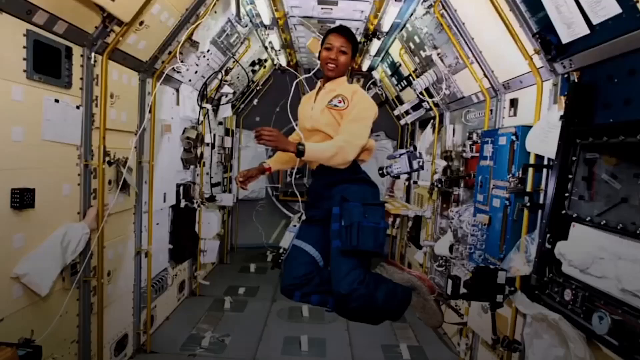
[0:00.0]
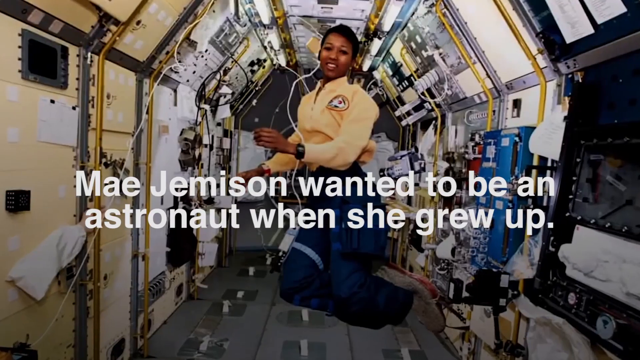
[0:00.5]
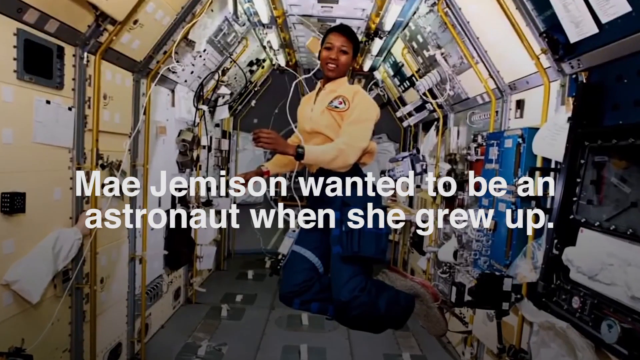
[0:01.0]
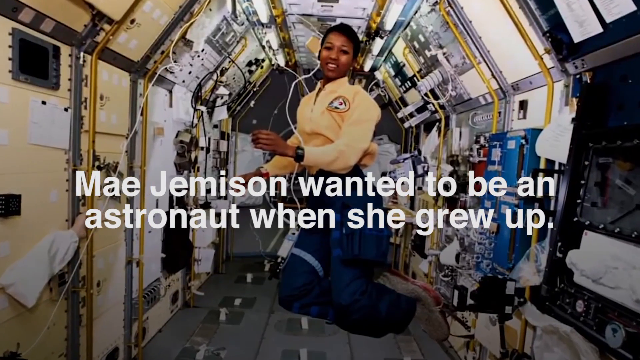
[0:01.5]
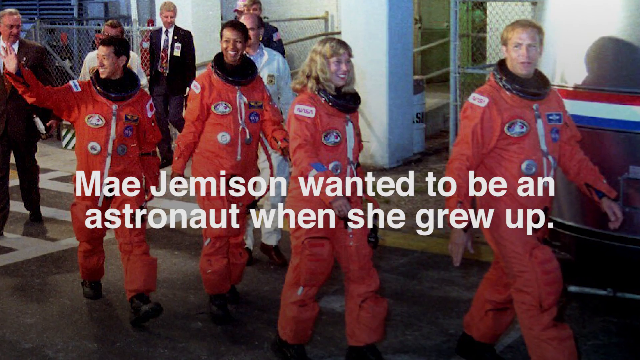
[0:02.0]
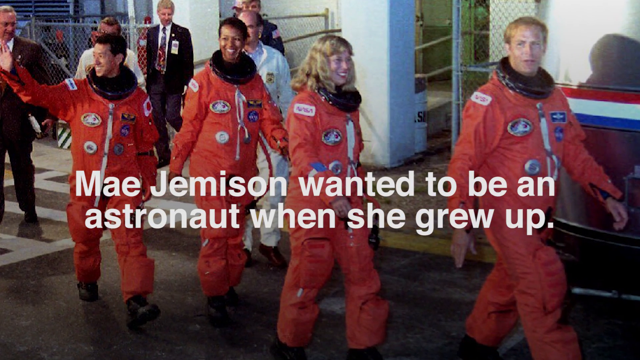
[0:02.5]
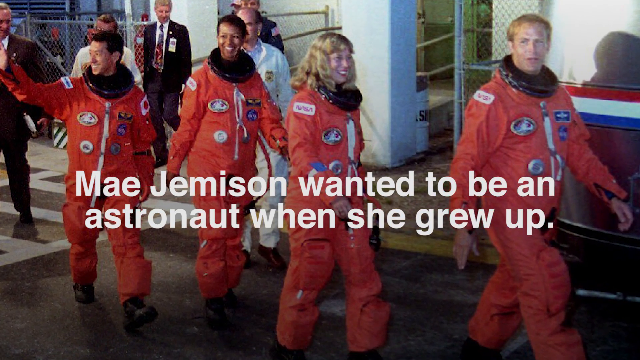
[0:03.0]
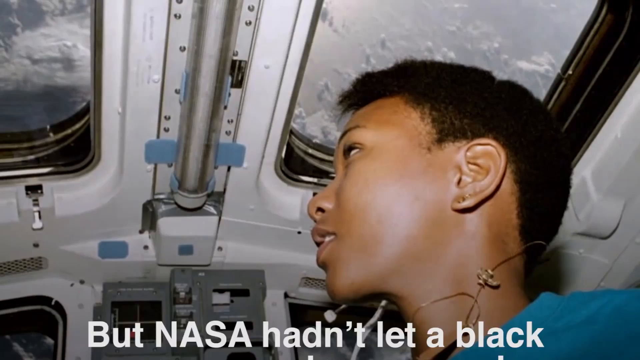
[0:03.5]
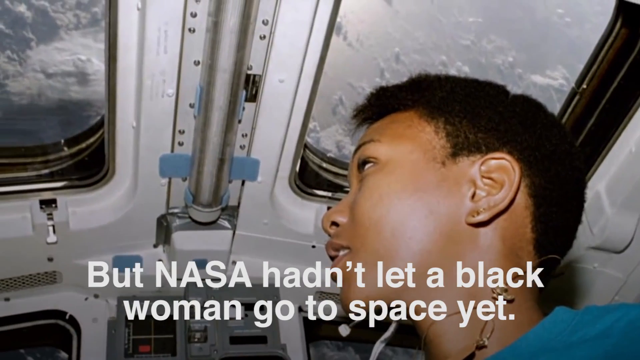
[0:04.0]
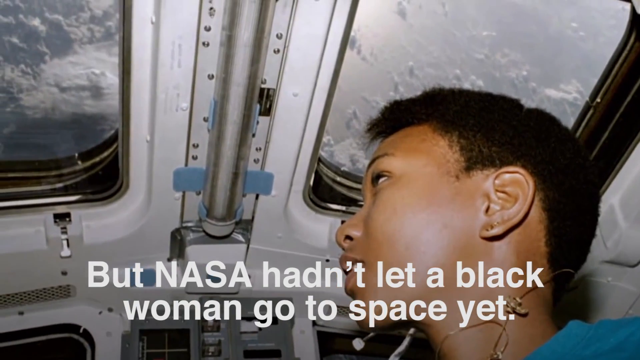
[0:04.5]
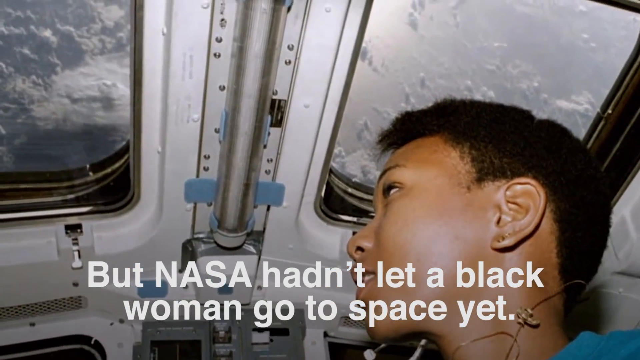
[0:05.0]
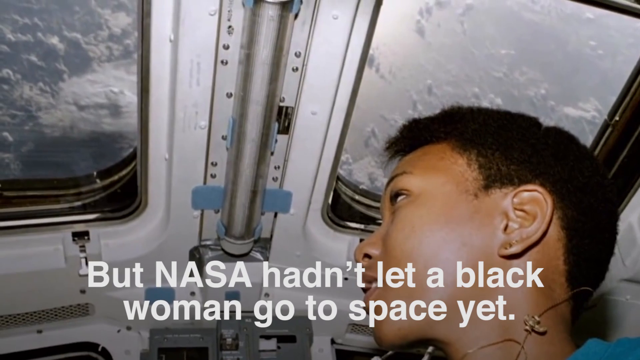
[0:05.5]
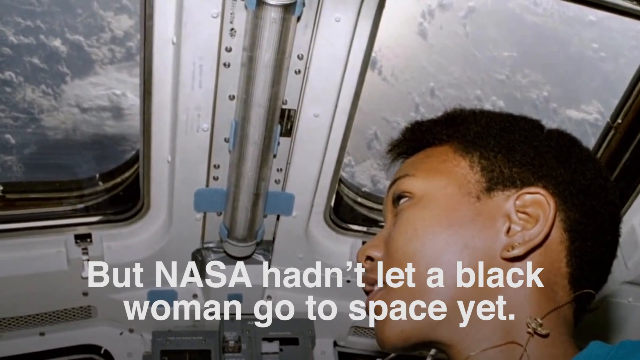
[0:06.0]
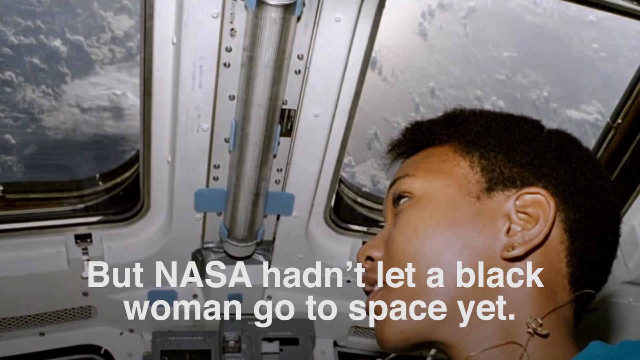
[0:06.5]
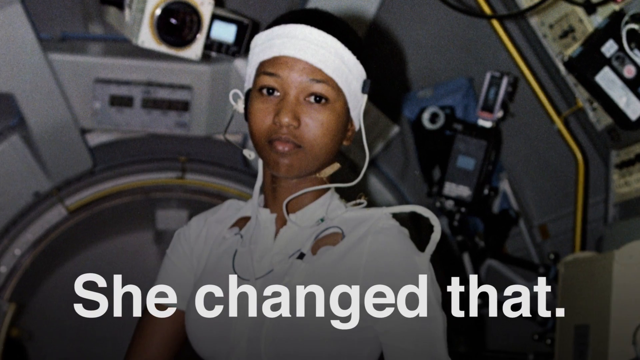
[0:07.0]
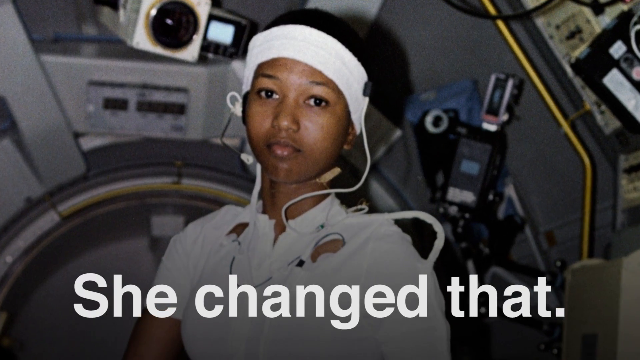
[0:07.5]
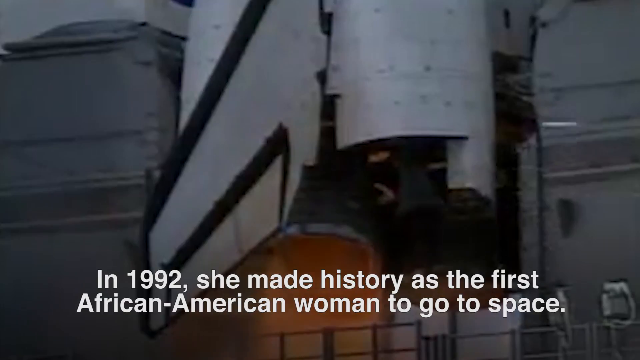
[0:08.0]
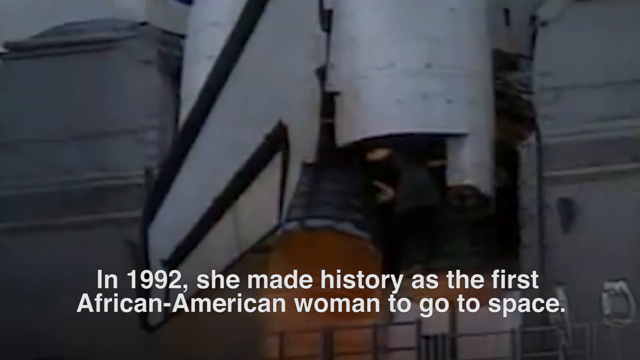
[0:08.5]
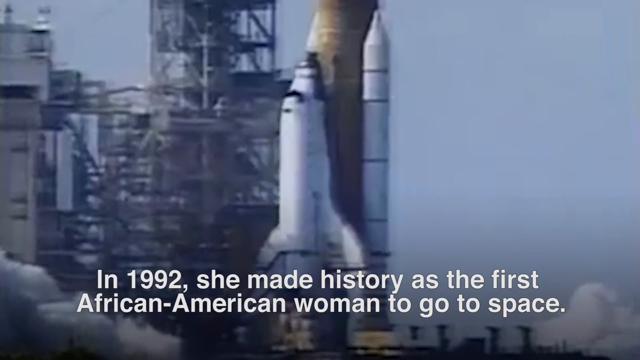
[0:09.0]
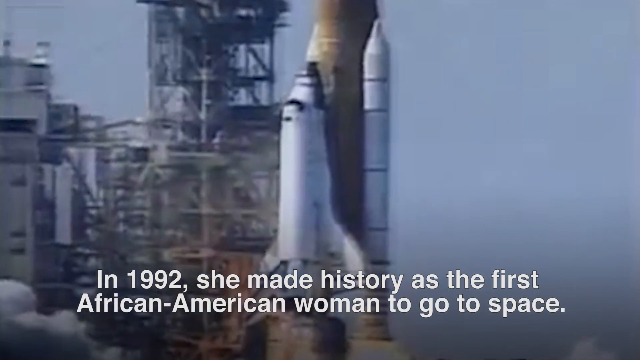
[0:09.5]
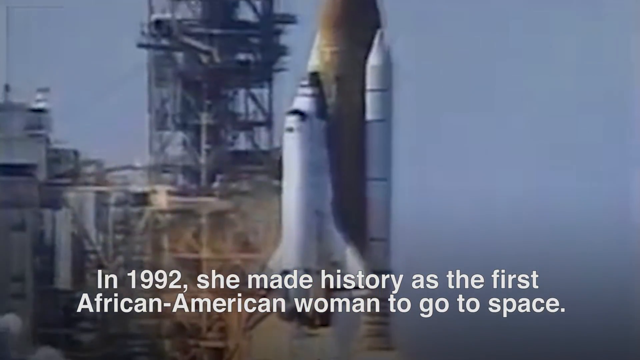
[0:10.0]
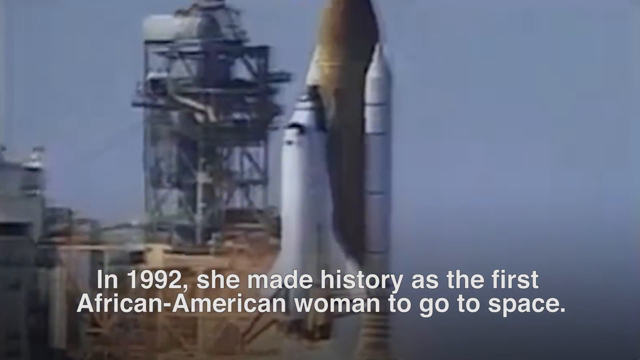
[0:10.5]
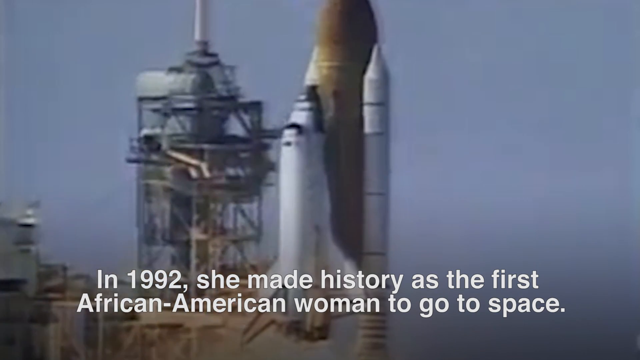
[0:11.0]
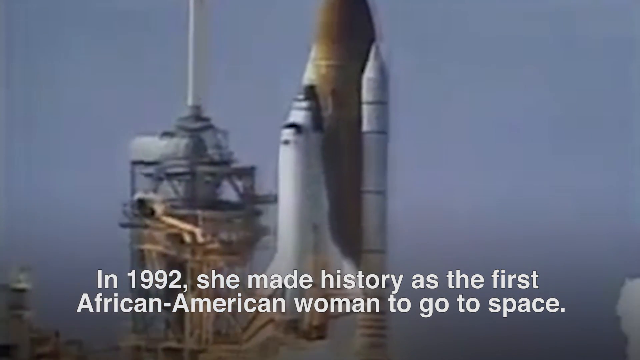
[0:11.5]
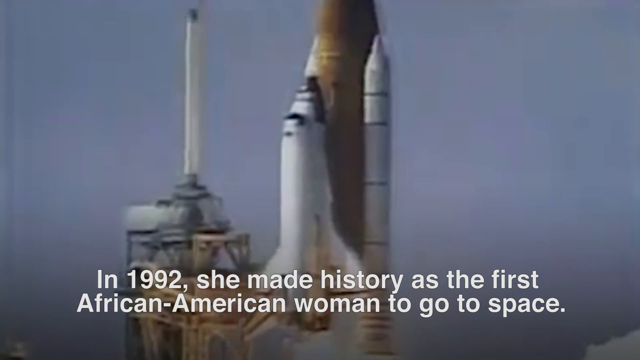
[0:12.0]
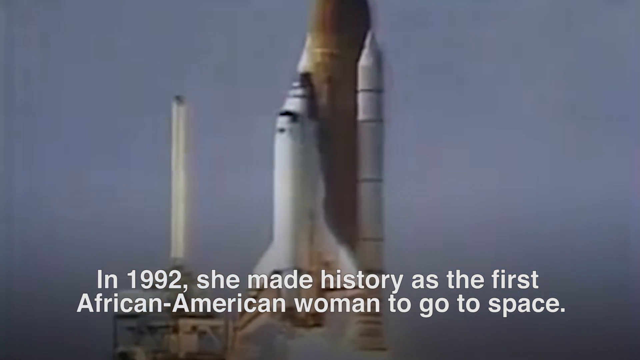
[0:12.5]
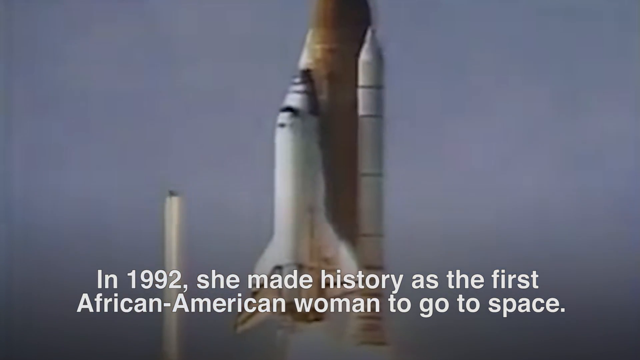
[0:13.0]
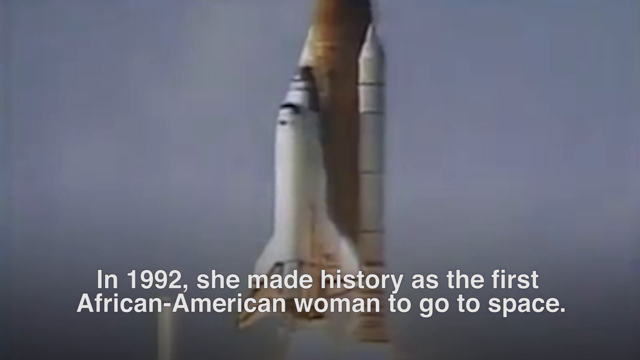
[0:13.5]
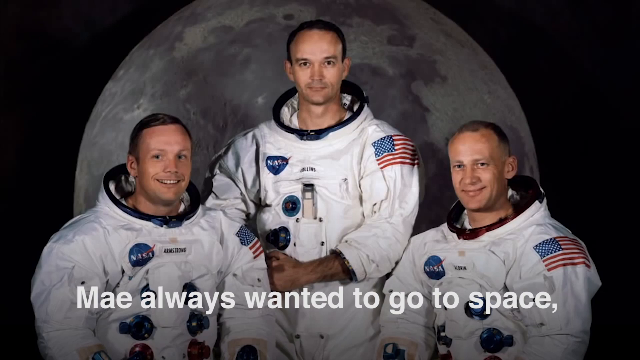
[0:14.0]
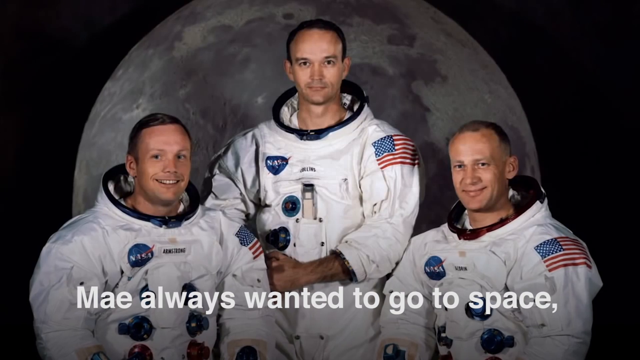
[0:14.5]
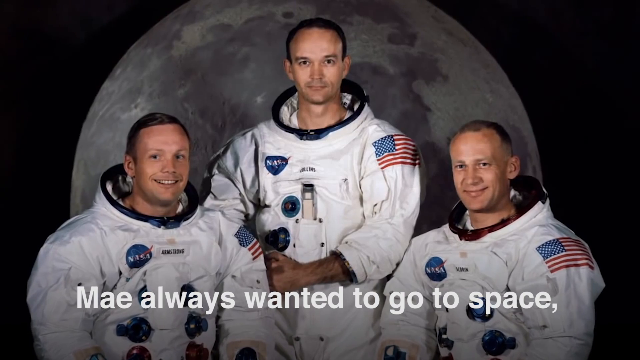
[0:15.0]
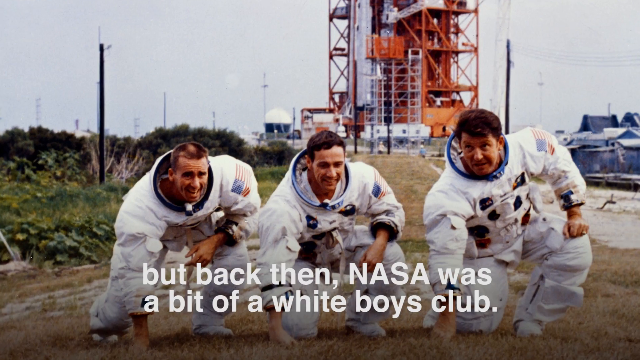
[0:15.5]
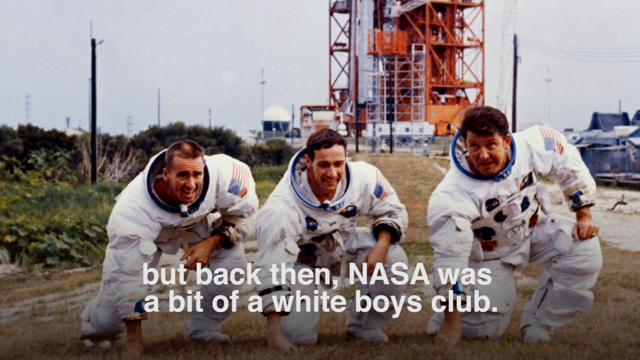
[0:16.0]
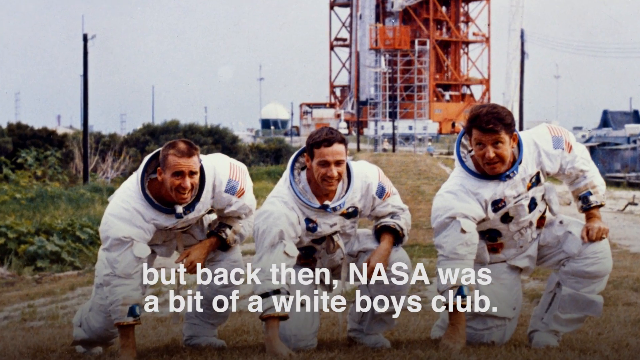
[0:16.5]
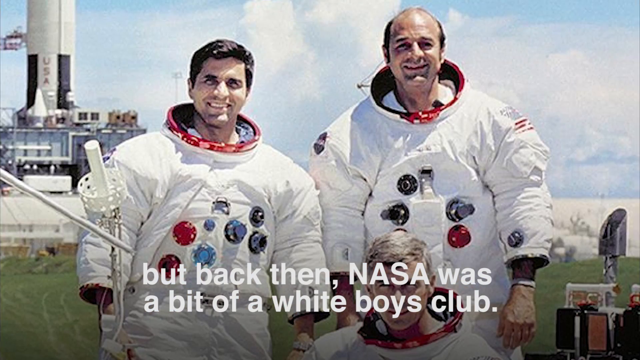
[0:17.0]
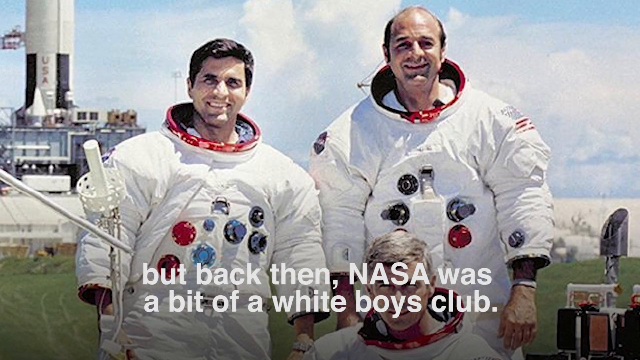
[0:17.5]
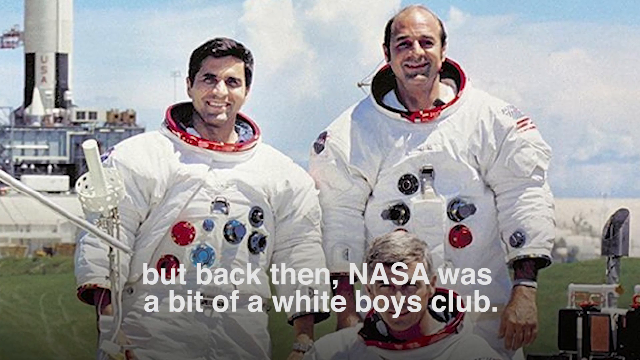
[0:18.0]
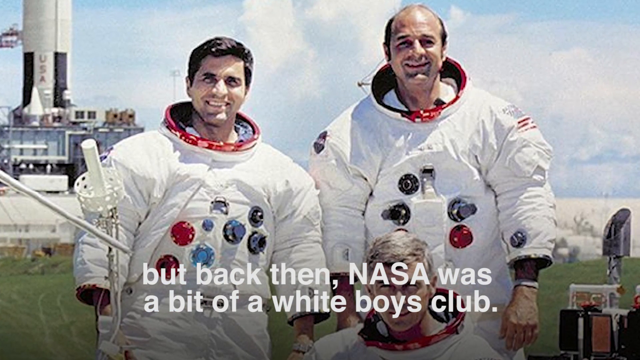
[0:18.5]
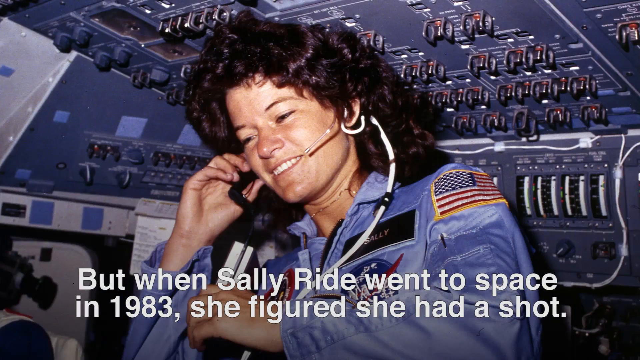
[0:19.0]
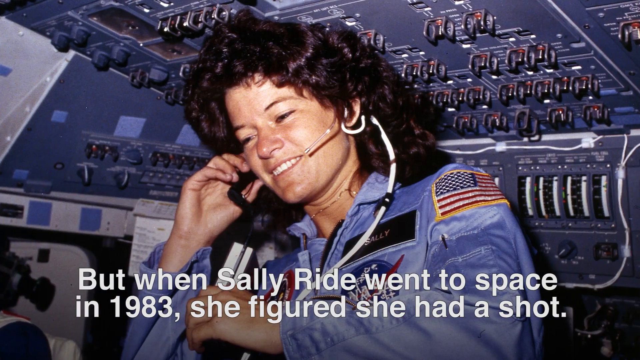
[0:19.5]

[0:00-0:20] A space shuttle is shown, along with the woman who was on the shuttle. The video states that in 1992 she made history as the first African-American woman to go to space. Three people are shown. The video notes that back then NASA was a bit of a white boys club, but when Shelly Wright went to space in 1983, she figured she had a shot. The woman is named Maya Jemison, who wanted to be an astronaut when she grew up, but NASA had not yet let black women go to space.